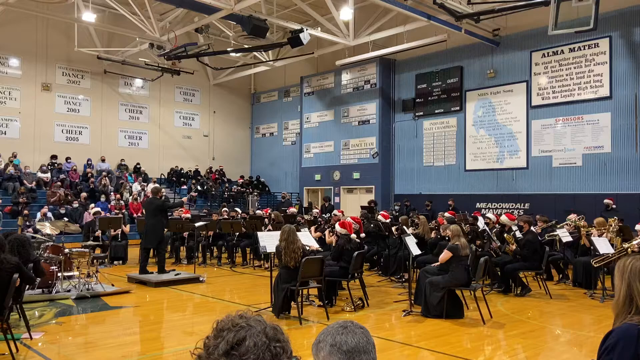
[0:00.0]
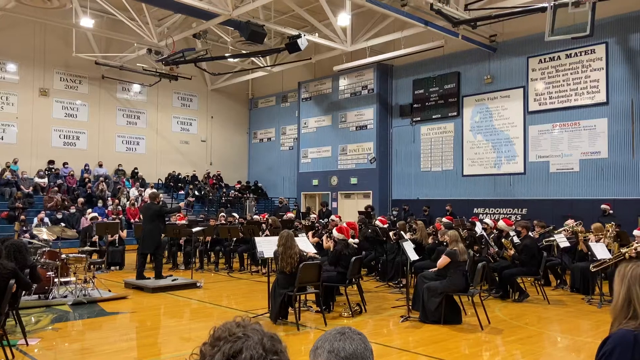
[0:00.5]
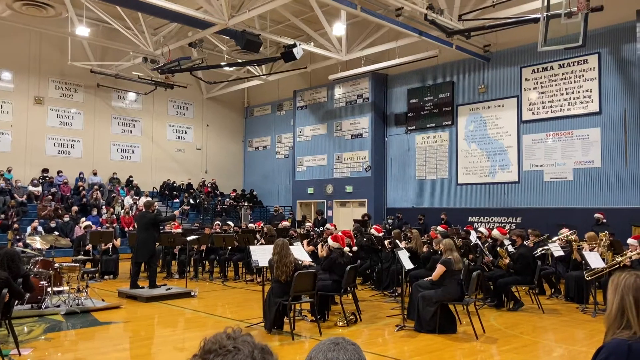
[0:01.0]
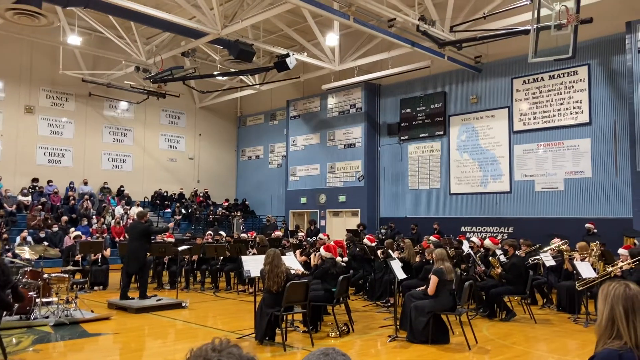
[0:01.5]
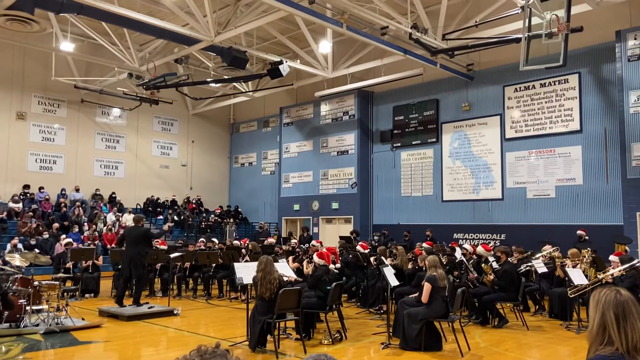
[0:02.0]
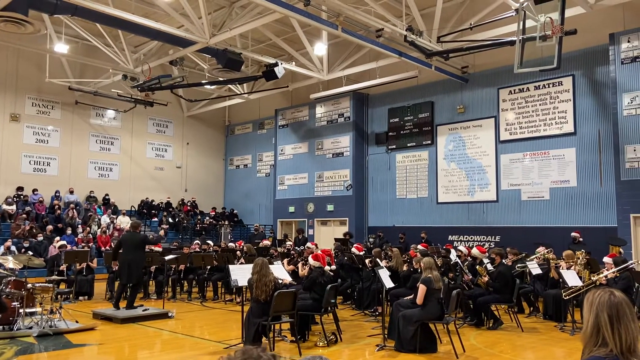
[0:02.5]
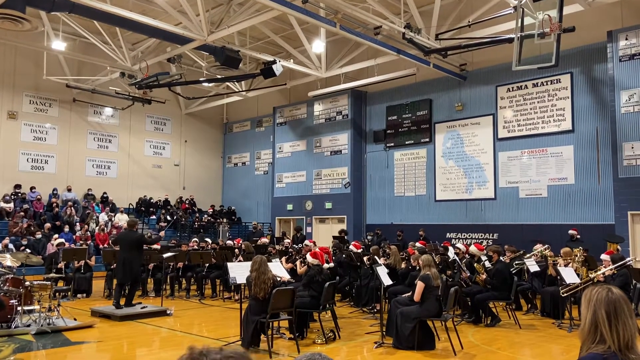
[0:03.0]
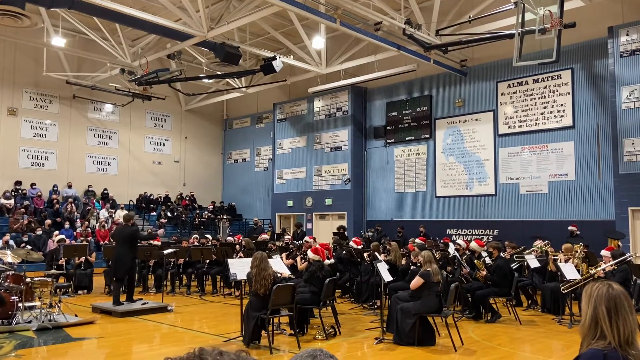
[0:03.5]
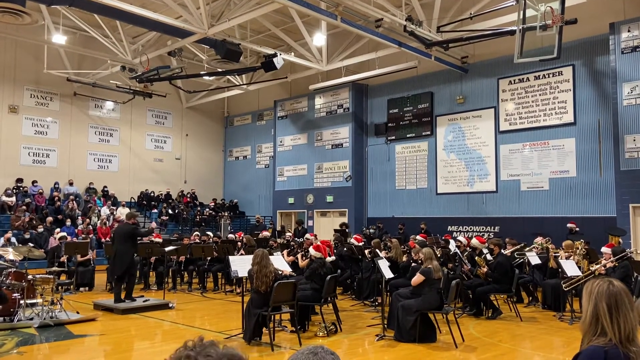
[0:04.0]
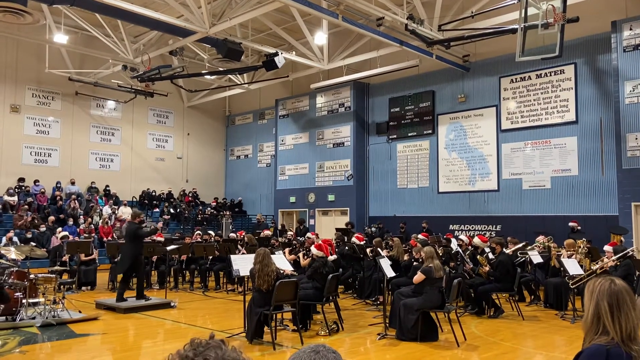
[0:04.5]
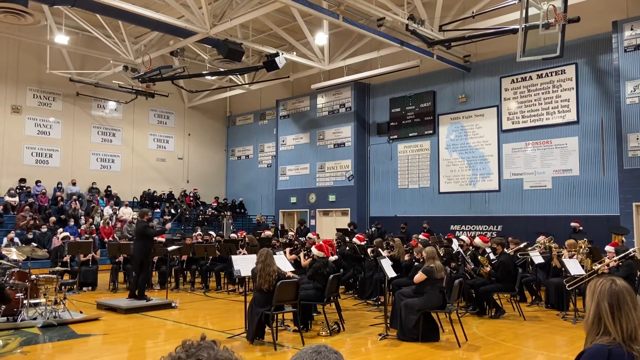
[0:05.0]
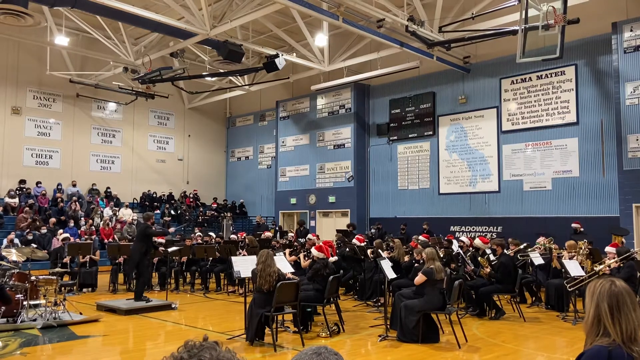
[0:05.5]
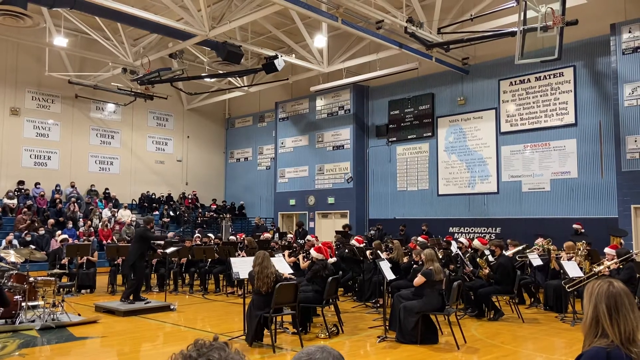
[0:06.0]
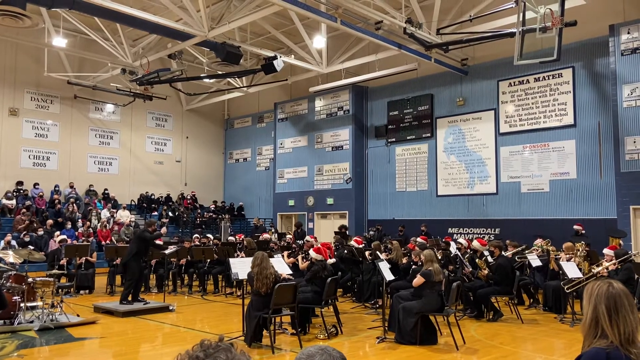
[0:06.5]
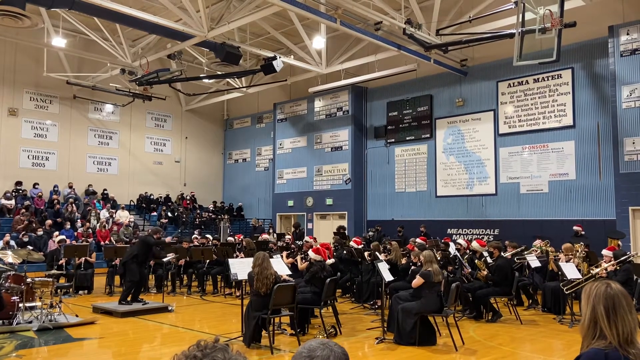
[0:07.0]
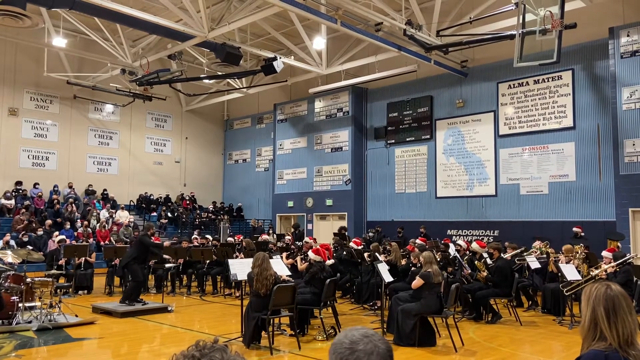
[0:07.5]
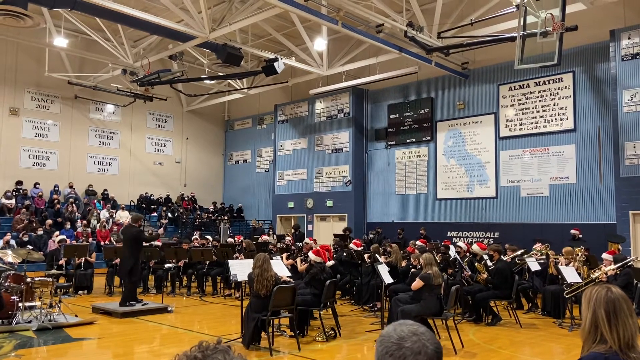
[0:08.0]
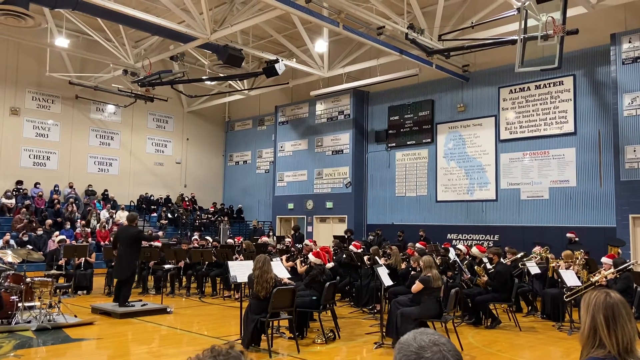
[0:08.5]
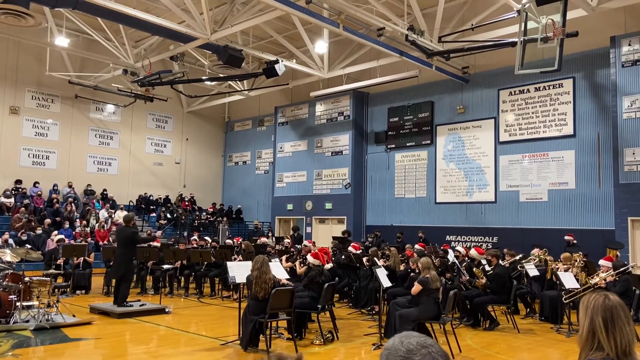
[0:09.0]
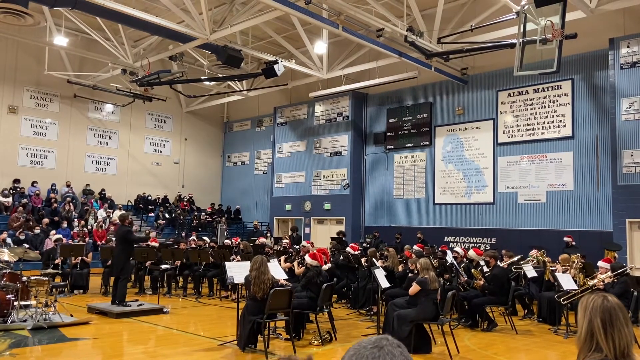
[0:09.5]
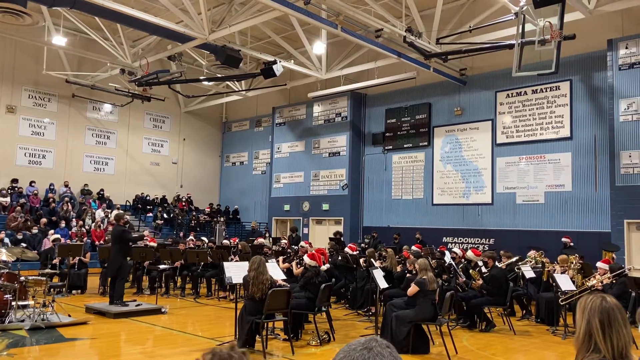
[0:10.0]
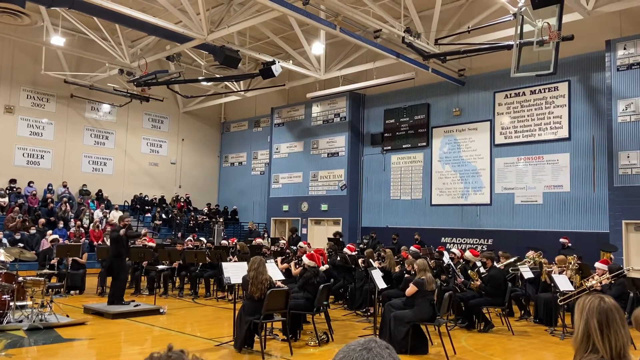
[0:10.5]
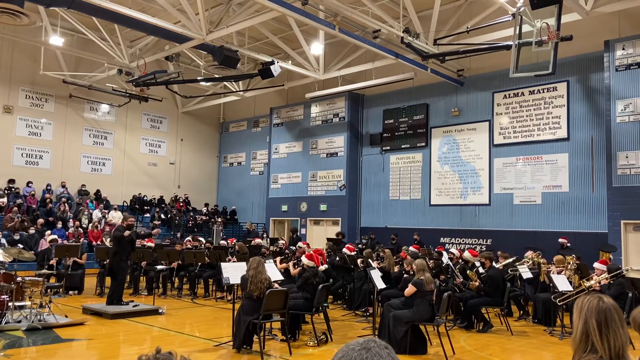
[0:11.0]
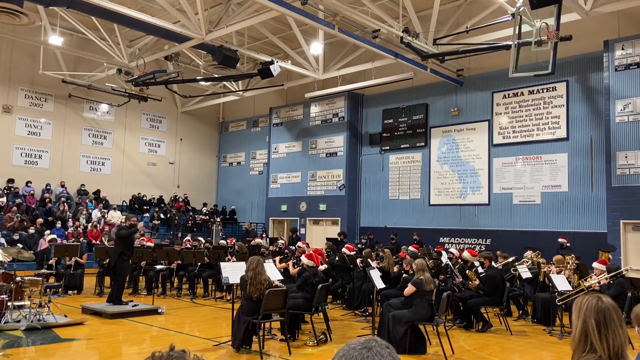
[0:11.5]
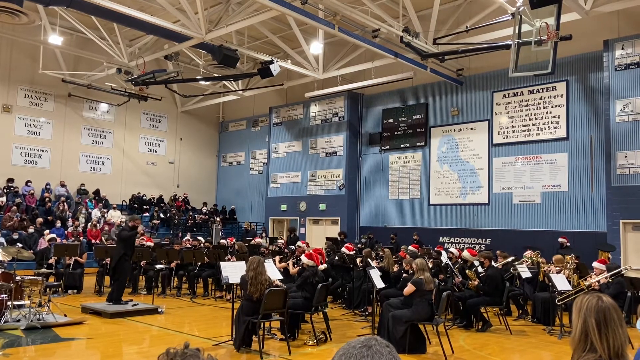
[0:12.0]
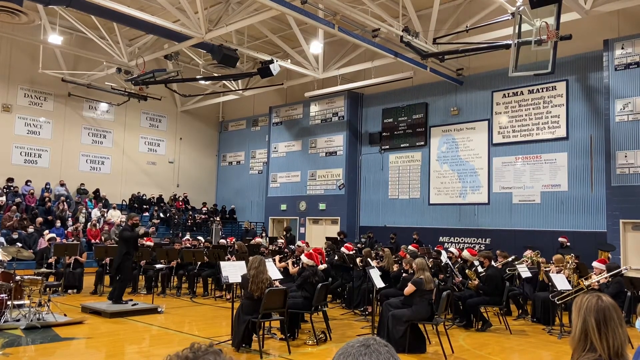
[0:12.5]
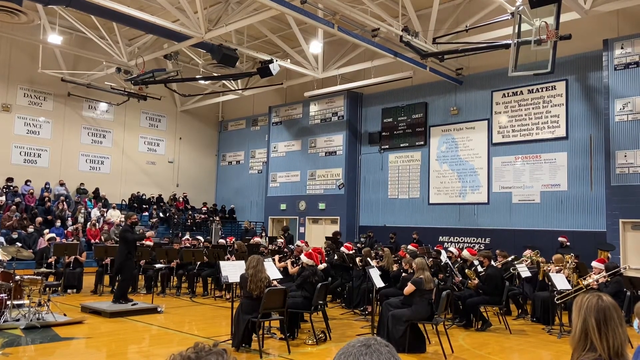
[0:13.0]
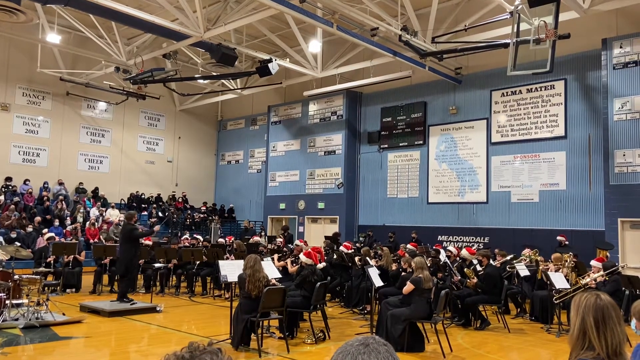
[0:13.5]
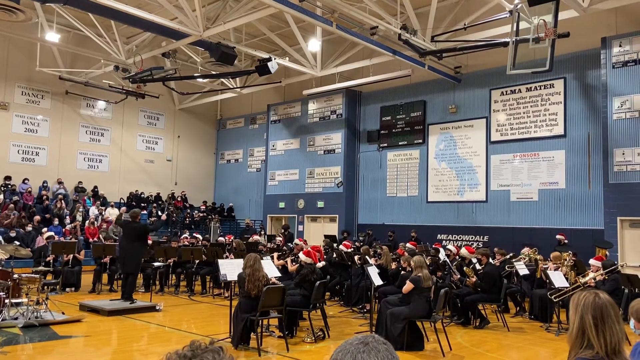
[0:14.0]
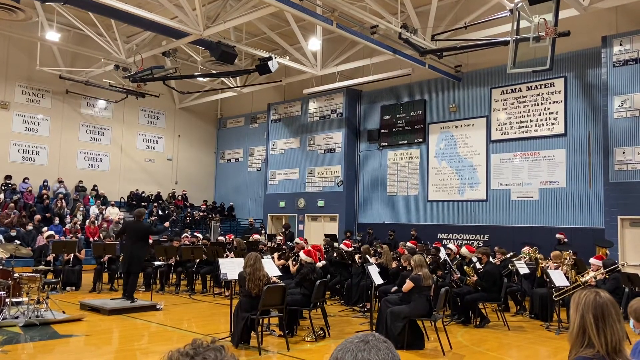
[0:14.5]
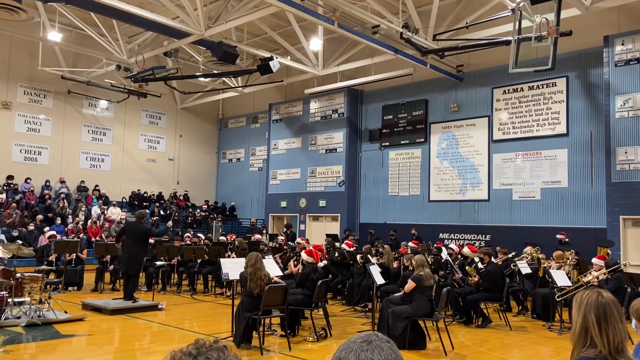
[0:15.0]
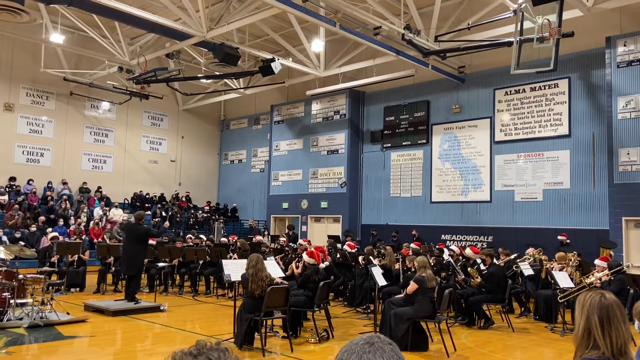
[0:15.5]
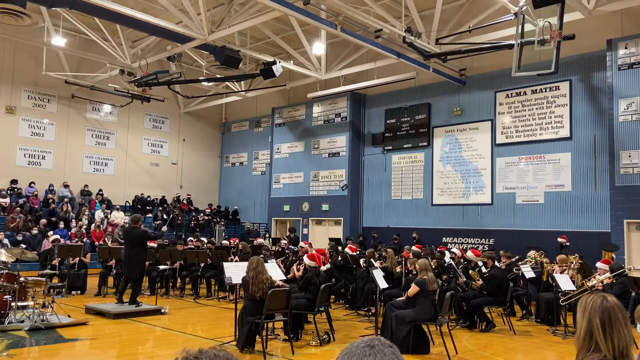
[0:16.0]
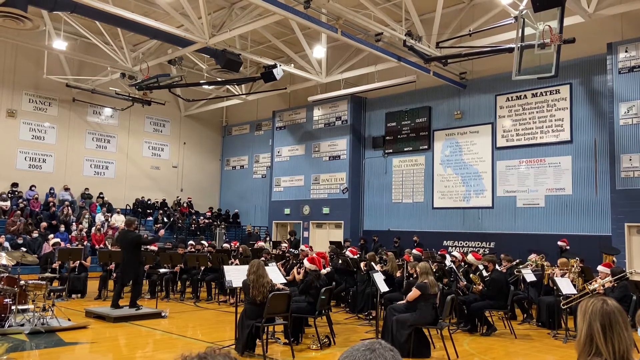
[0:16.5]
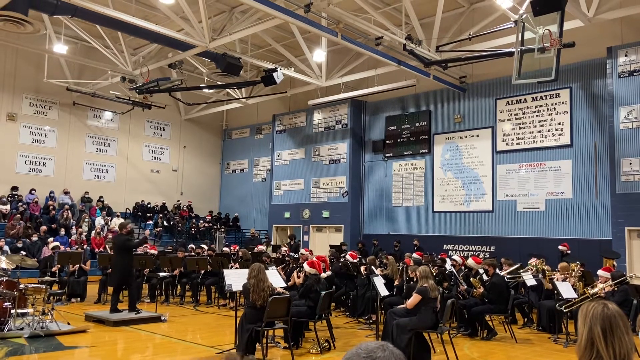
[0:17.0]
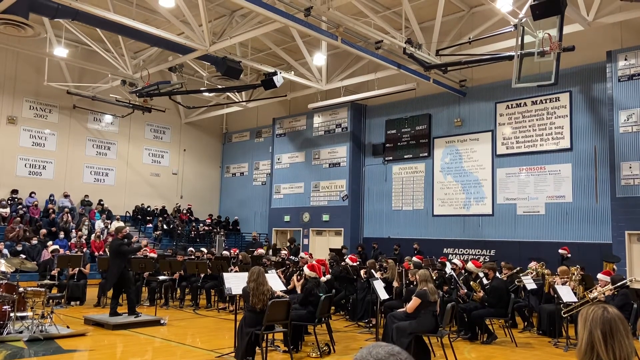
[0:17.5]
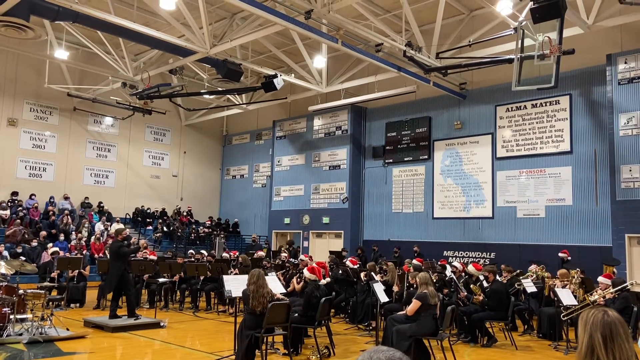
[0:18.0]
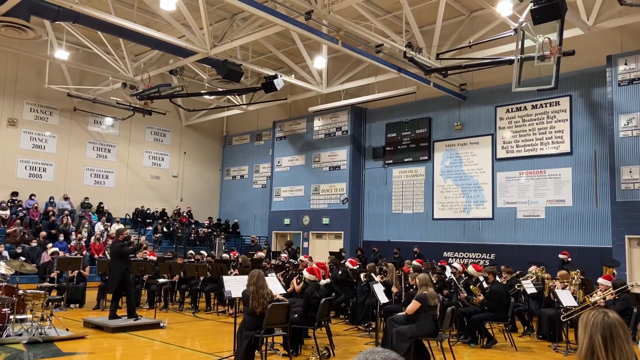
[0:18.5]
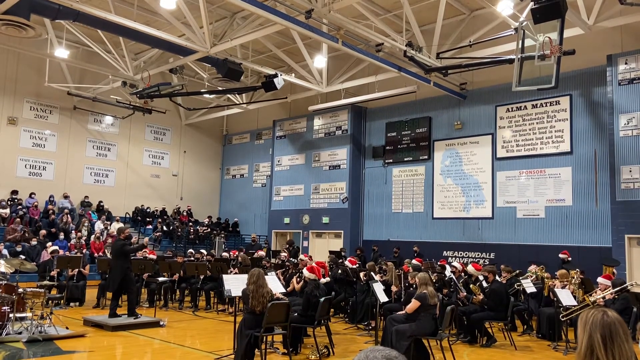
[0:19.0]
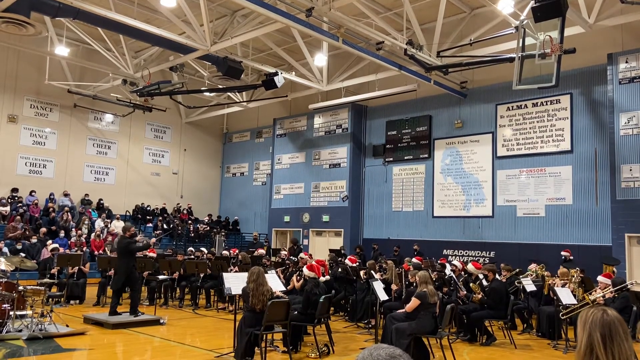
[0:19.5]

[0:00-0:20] The video appears to take place in a gymnasium with a shiny wood floor and bleachers on the left. On the gym floor, a group of people sits in chairs, looking like it could be a band, and everyone is wearing black. In the center of them is a man in a black suit holding a small stick, like a music conductor, and he starts moving his arms around. The people are holding their musical instruments, and some seem to be wearing red and white Santa hats. Not many people start playing right at the beginning when he starts moving his hands. He is standing on a tiny stage, just a little square not far off the ground.